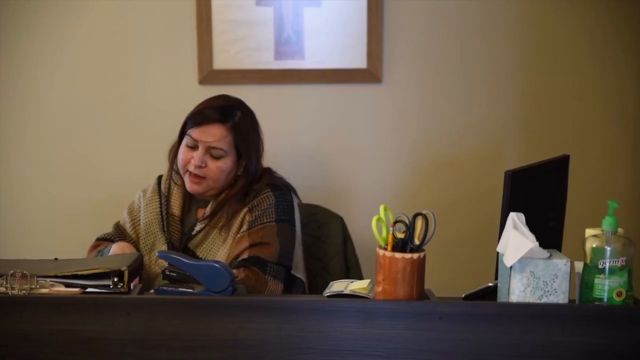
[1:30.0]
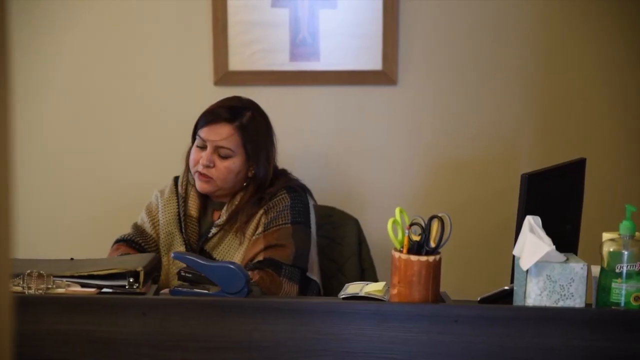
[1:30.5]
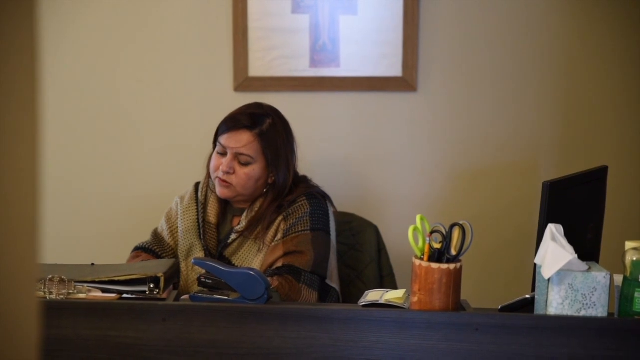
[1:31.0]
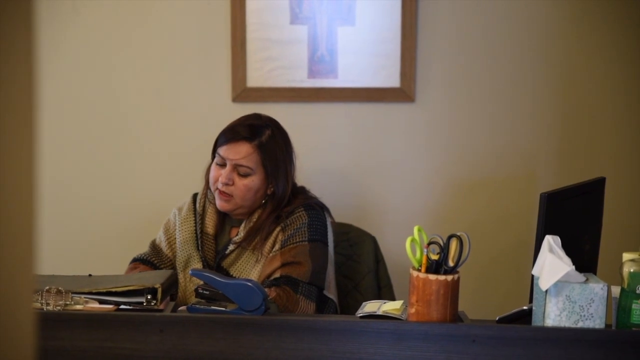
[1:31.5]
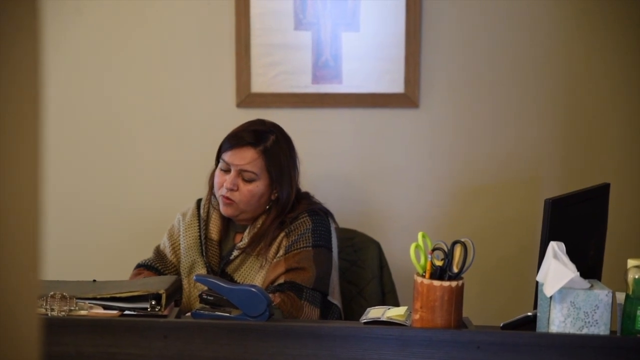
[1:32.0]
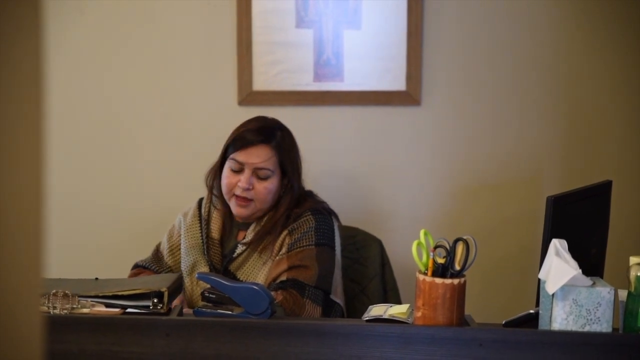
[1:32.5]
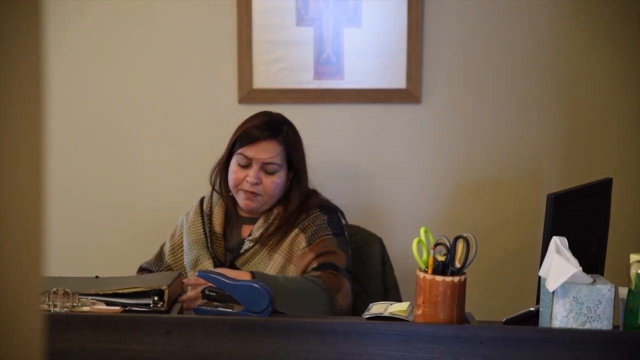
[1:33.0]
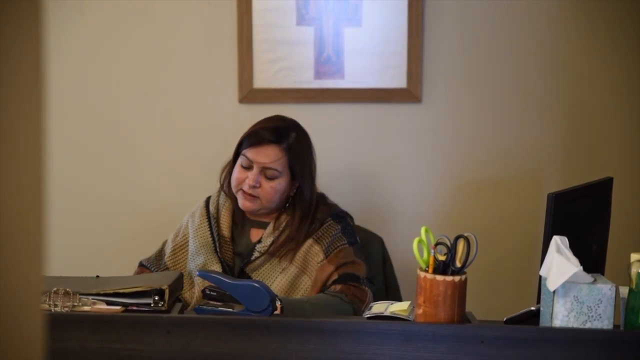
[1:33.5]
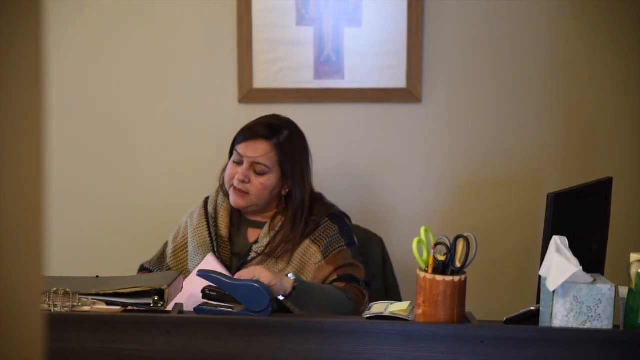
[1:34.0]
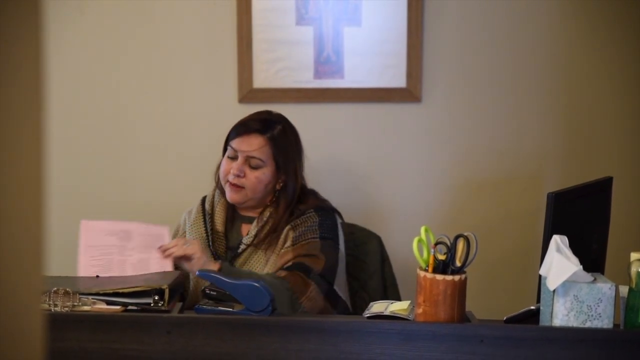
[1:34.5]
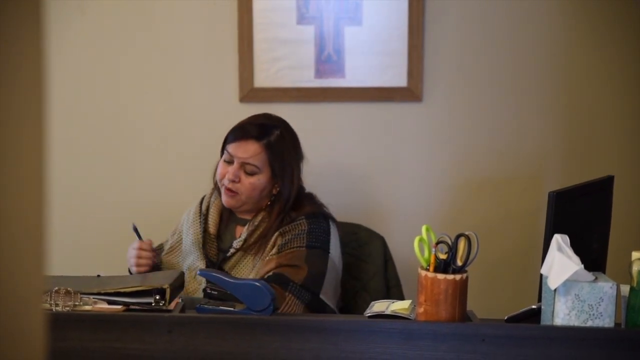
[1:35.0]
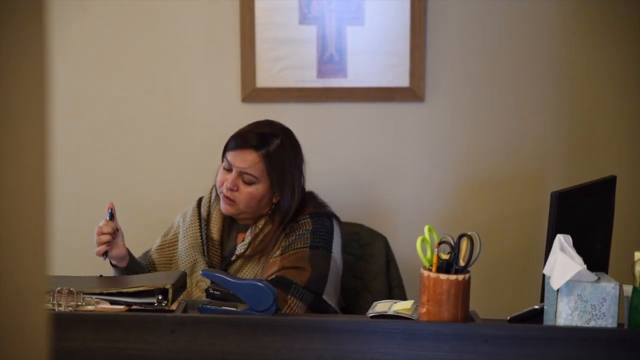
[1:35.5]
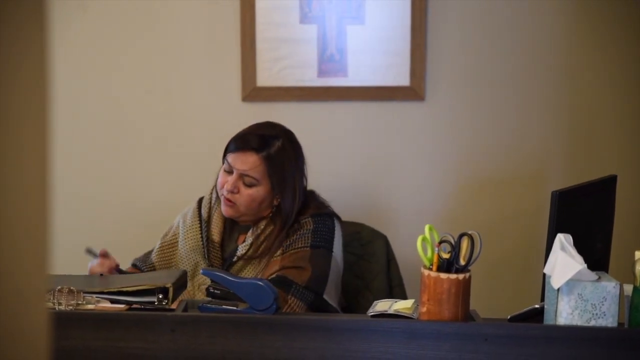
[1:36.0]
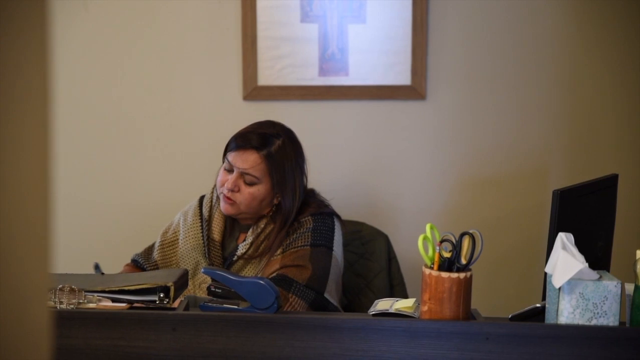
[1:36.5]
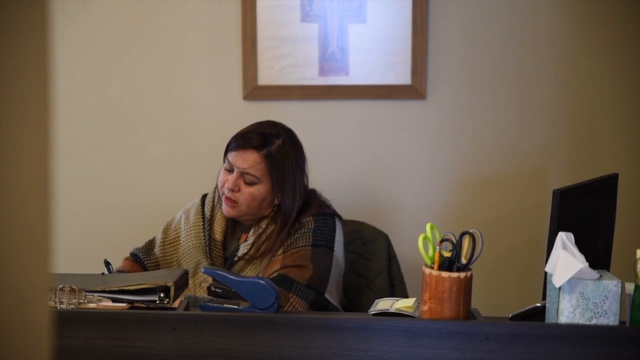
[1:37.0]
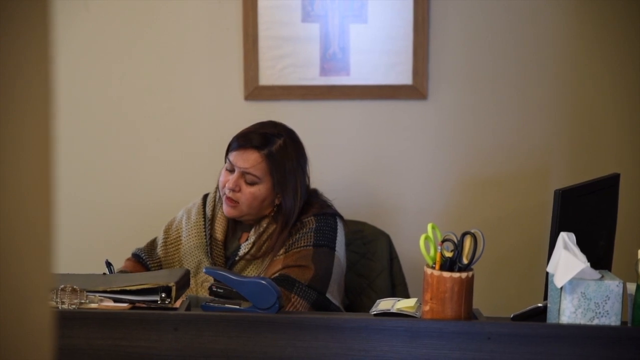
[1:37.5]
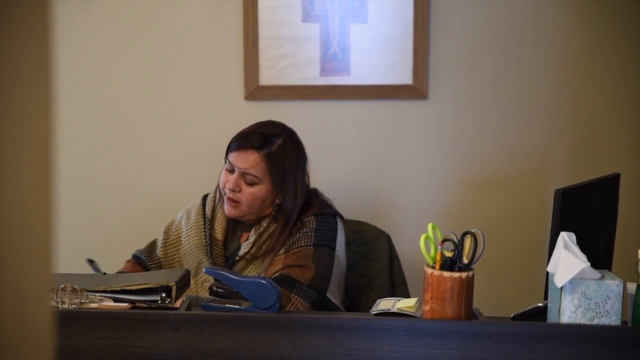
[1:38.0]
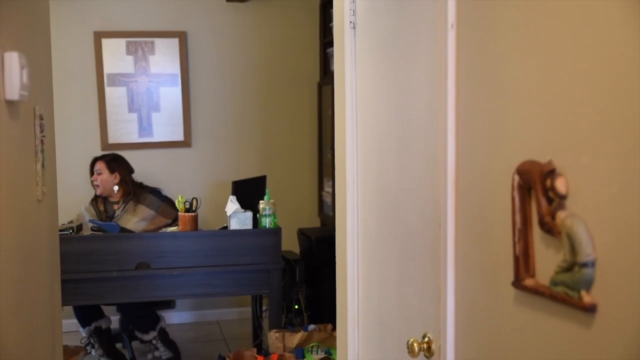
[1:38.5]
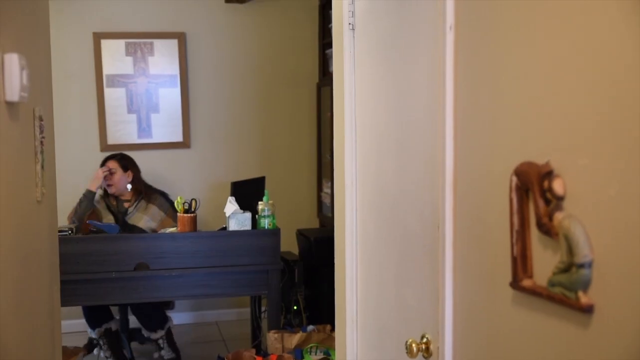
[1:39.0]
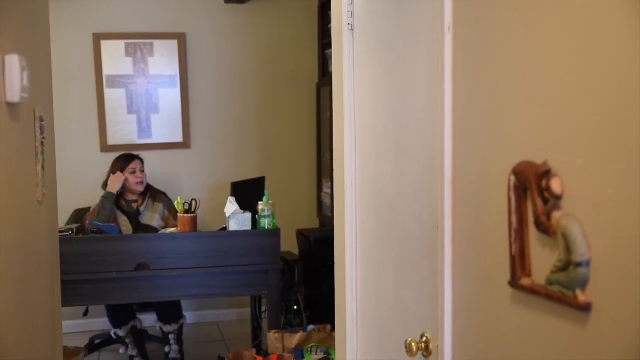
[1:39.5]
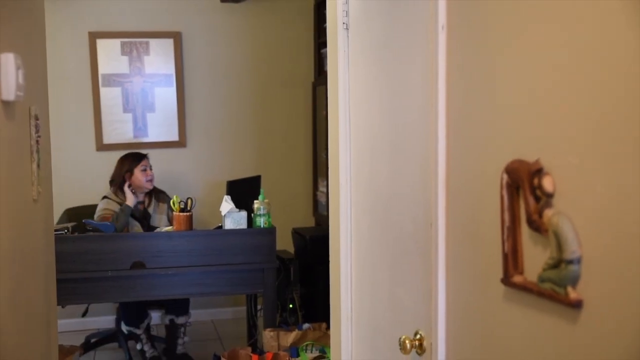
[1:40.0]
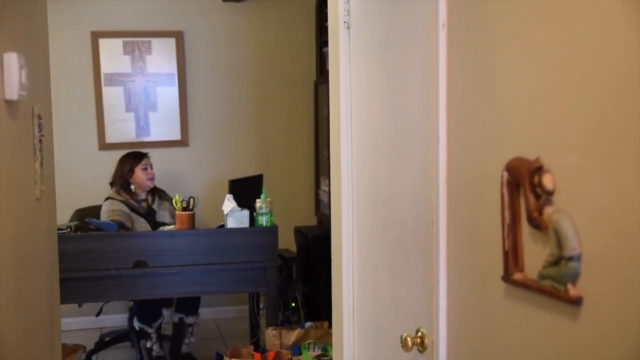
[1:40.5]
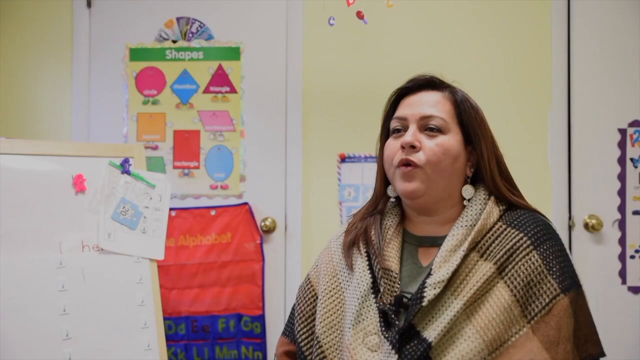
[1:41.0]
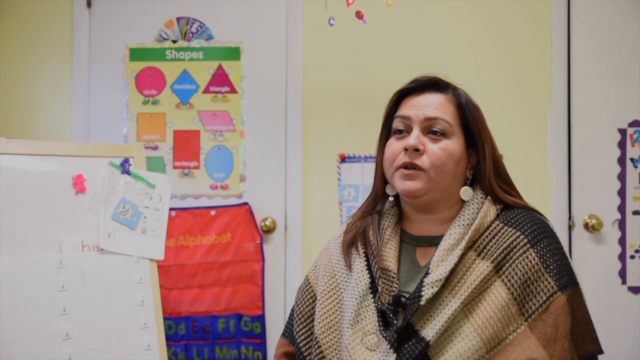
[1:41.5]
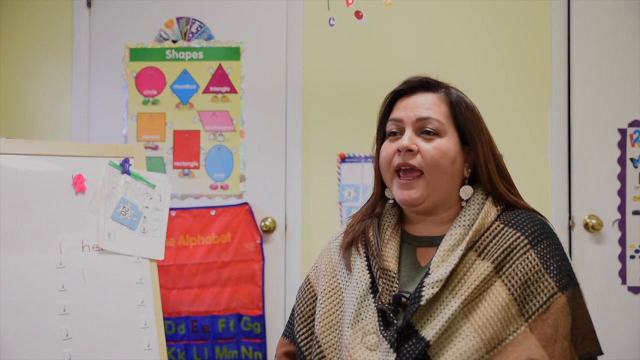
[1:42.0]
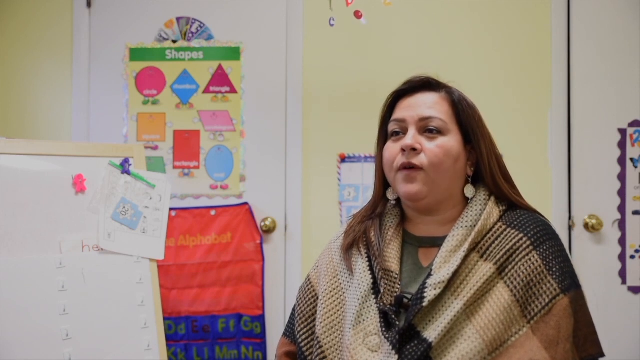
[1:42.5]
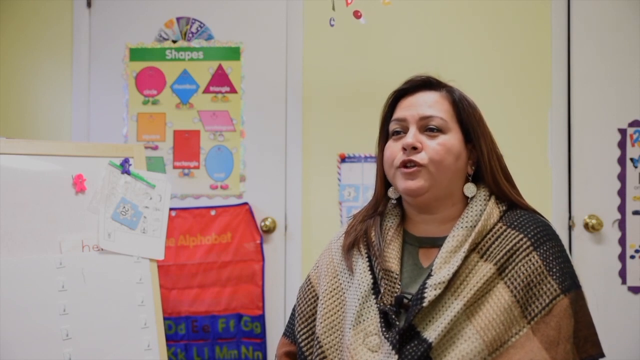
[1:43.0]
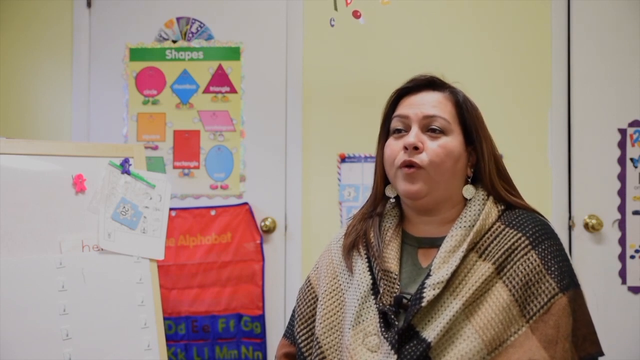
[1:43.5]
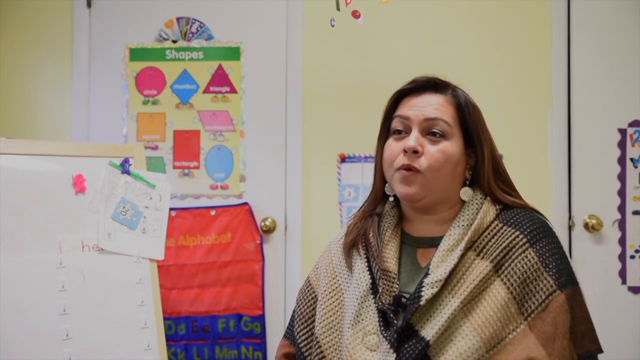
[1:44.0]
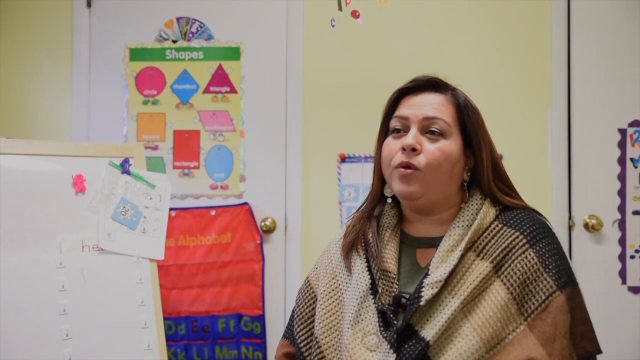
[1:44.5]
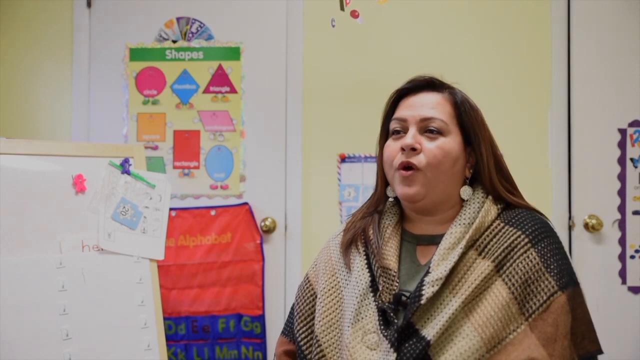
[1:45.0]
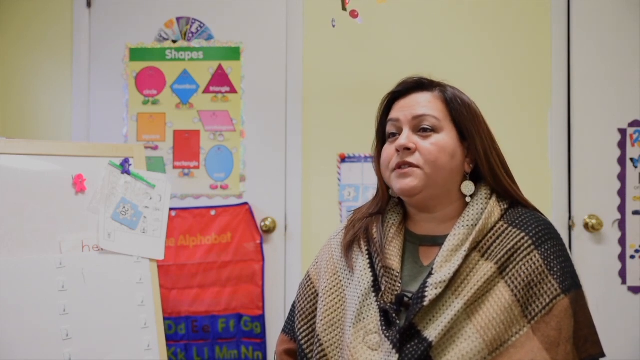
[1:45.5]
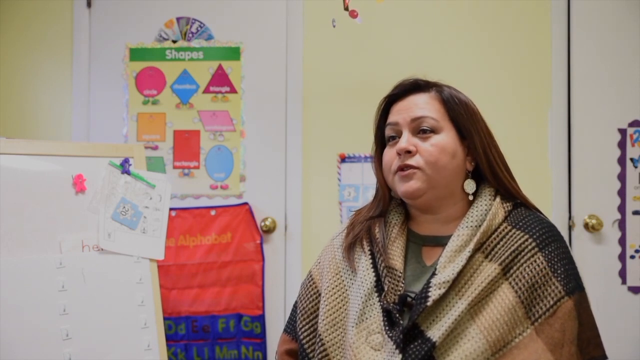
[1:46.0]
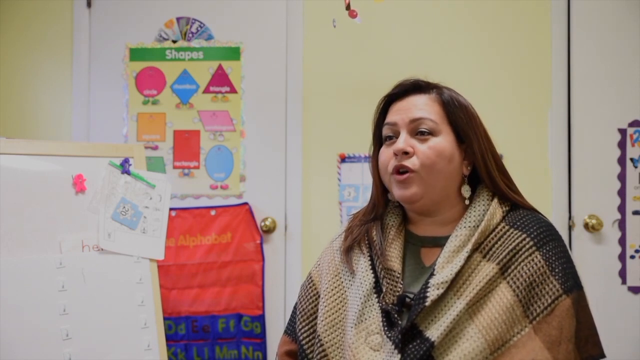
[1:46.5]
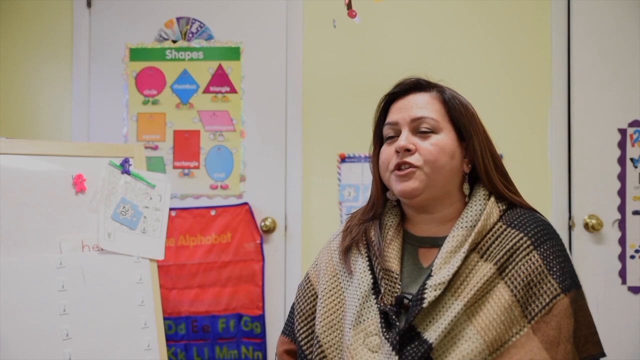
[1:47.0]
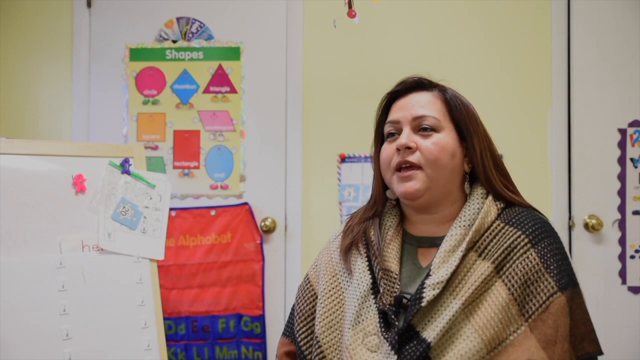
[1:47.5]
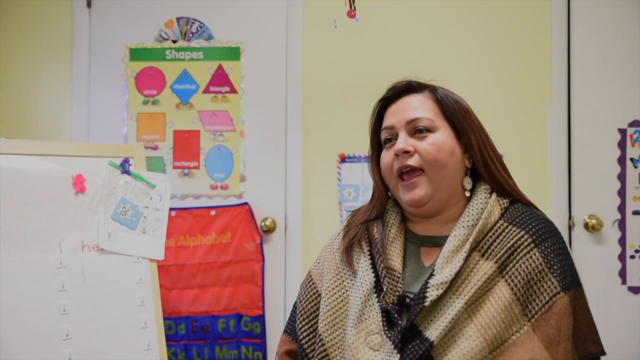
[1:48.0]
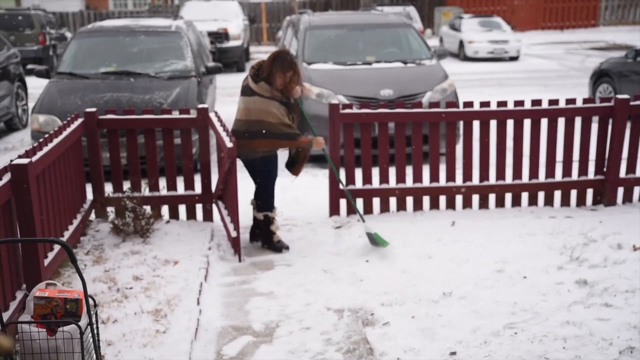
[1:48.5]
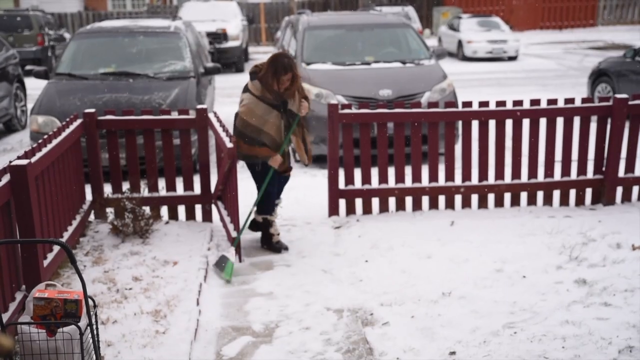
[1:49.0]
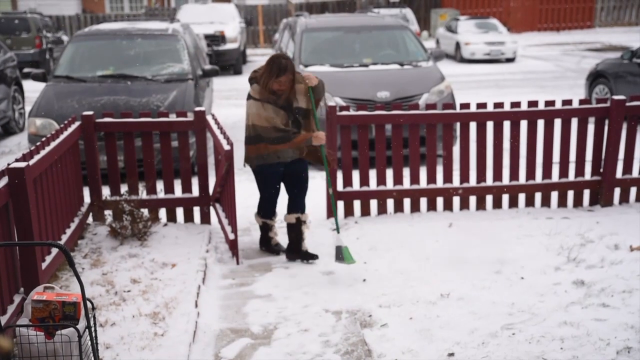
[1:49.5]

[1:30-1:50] The woman sits on a chair speaking, and behind her is a portrait showing a cross, only half of which is visible. A stapler is in front of her. On her left-hand side she raises a pink paper, and she raises a cup on her table that looks like it has lots of scissors in it. A serviette and files are also on the table, and she attempts to write something on the pink paper. The camera zooms out and captures the other entrance of the office with its handle, and the control for the fan in the room. The woman speaks to the camera.